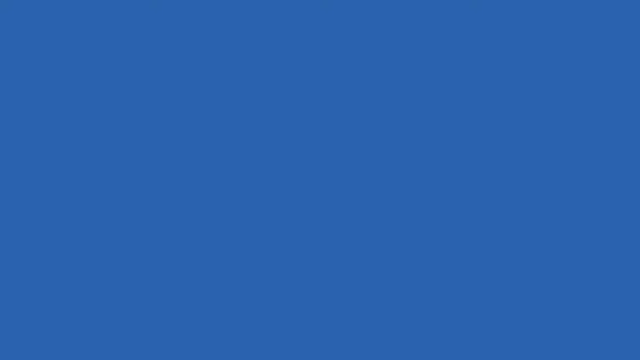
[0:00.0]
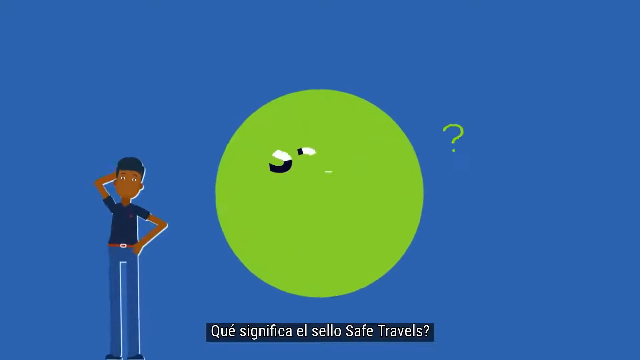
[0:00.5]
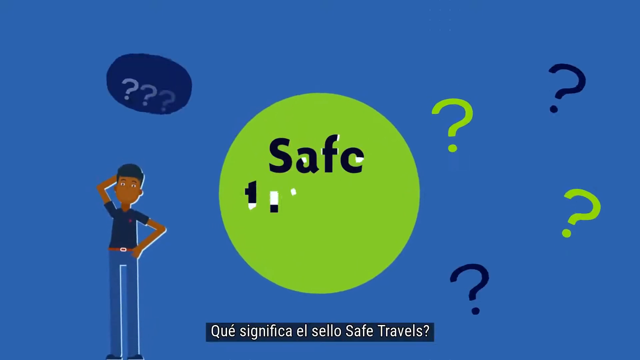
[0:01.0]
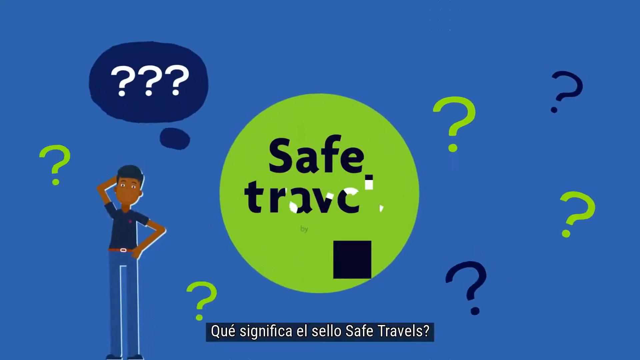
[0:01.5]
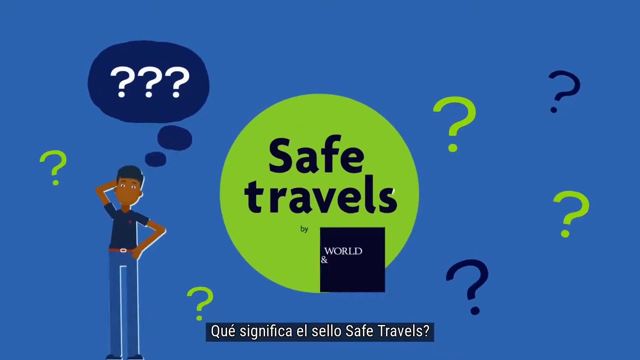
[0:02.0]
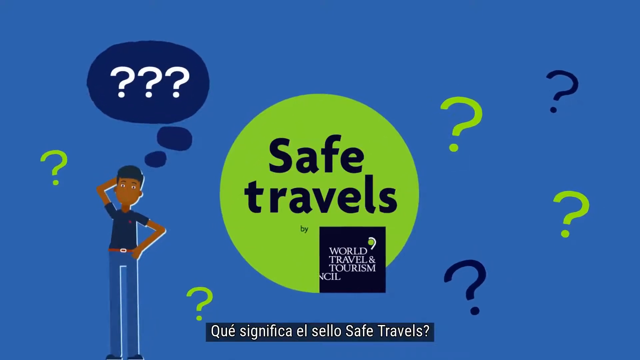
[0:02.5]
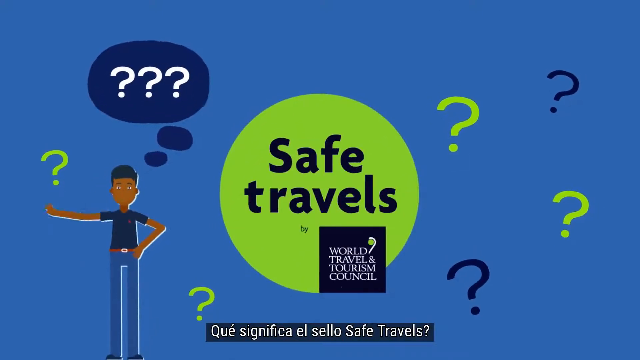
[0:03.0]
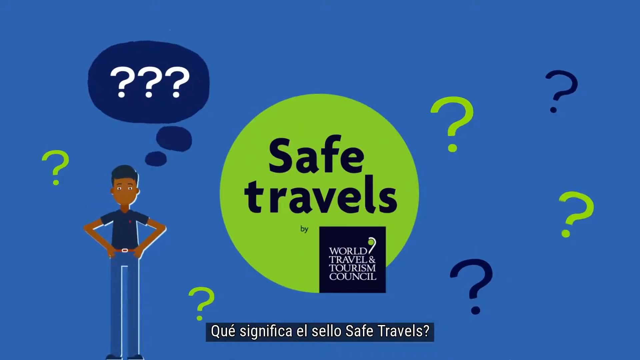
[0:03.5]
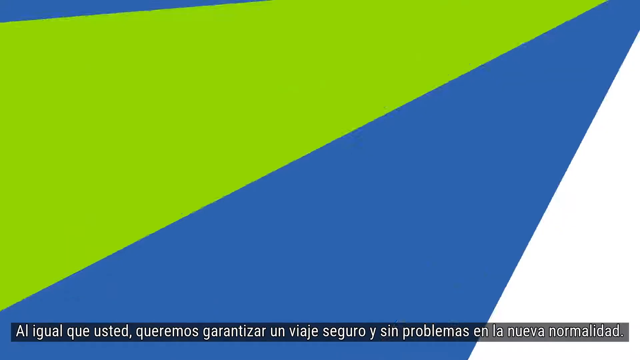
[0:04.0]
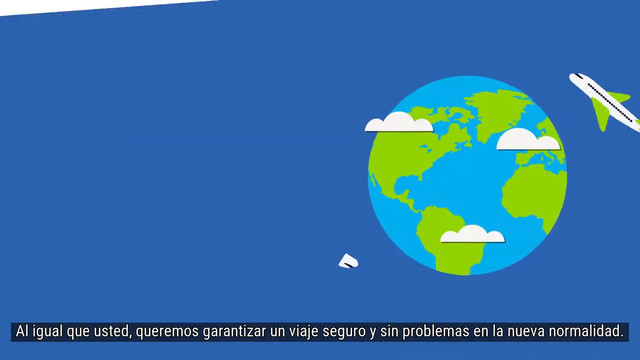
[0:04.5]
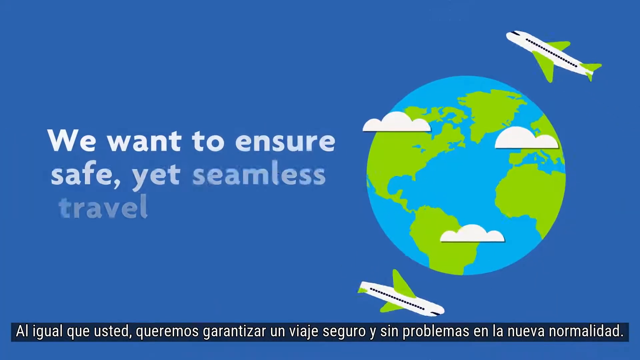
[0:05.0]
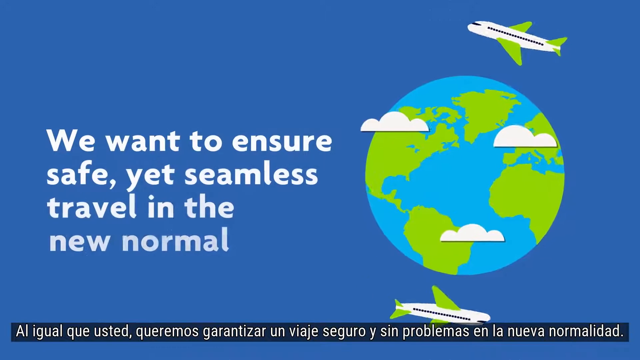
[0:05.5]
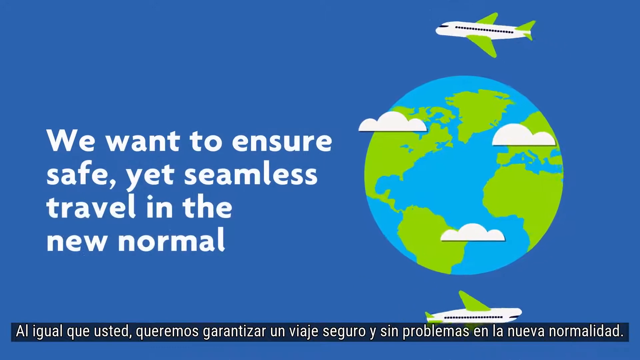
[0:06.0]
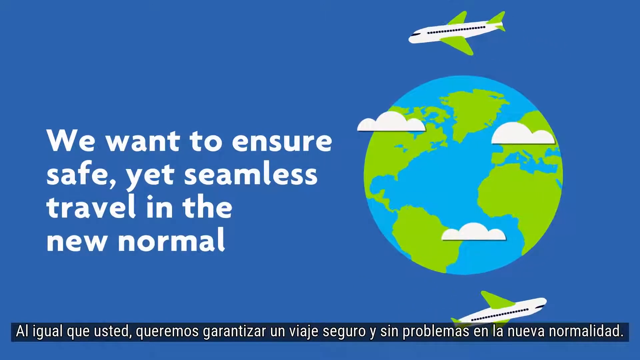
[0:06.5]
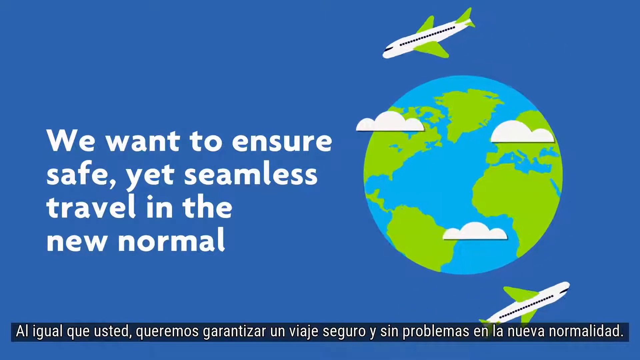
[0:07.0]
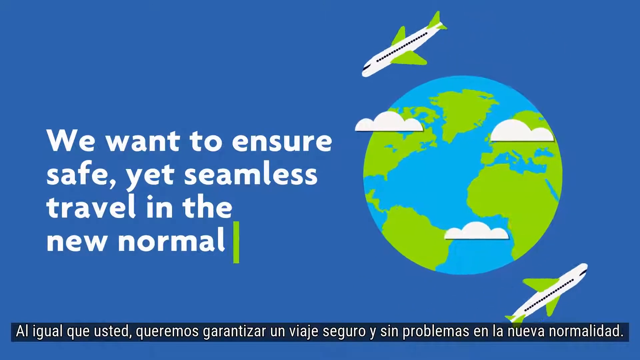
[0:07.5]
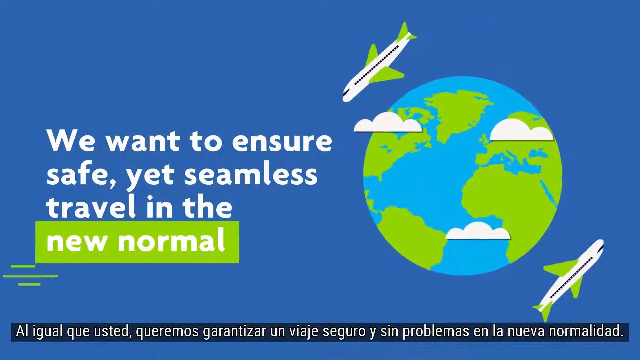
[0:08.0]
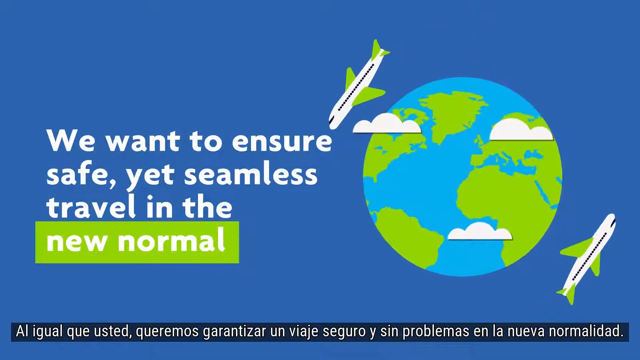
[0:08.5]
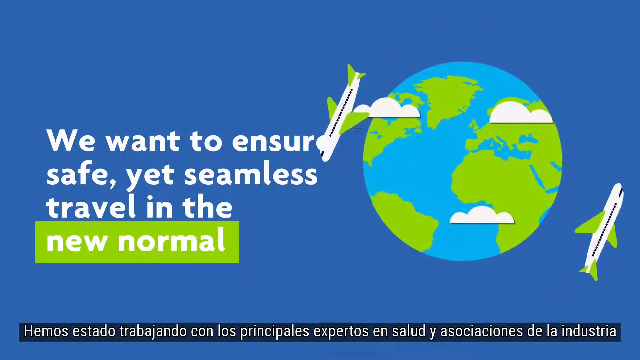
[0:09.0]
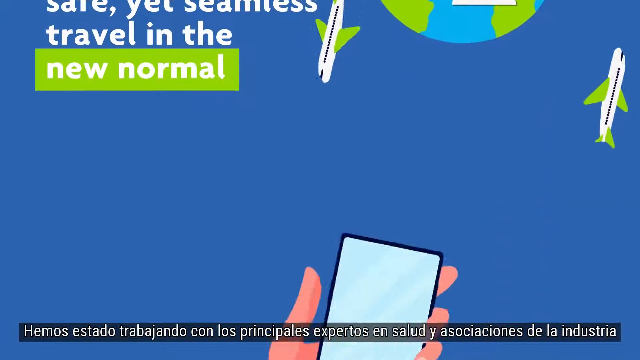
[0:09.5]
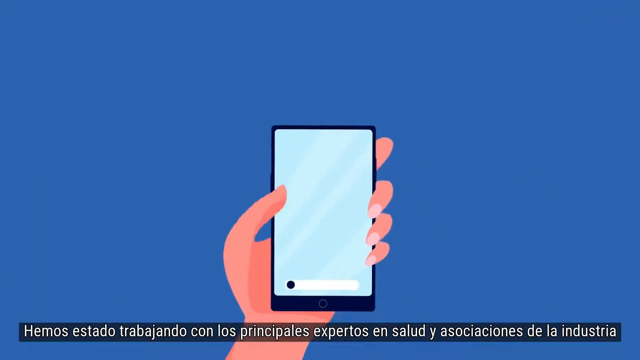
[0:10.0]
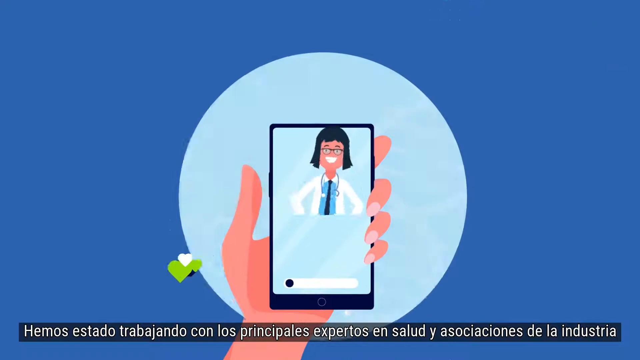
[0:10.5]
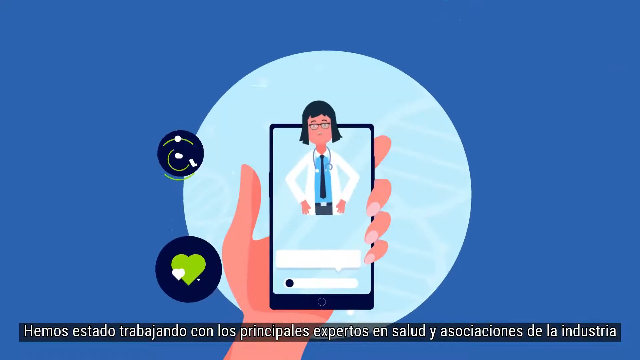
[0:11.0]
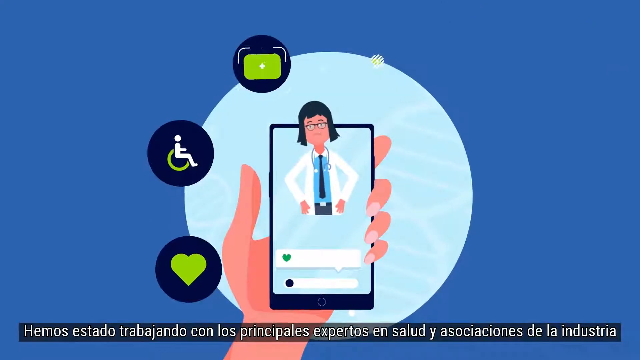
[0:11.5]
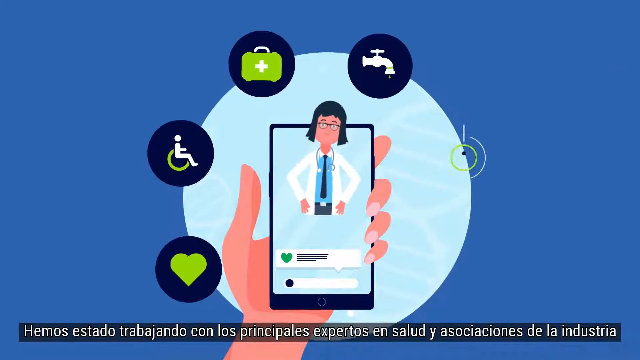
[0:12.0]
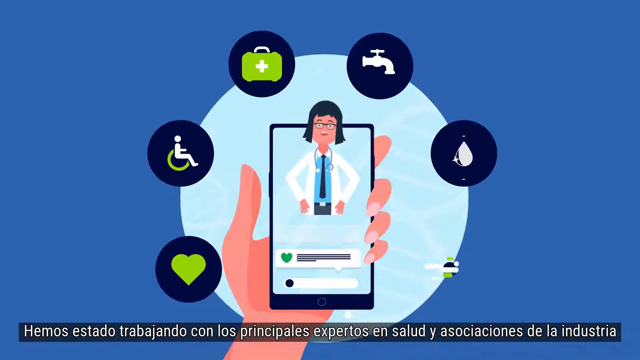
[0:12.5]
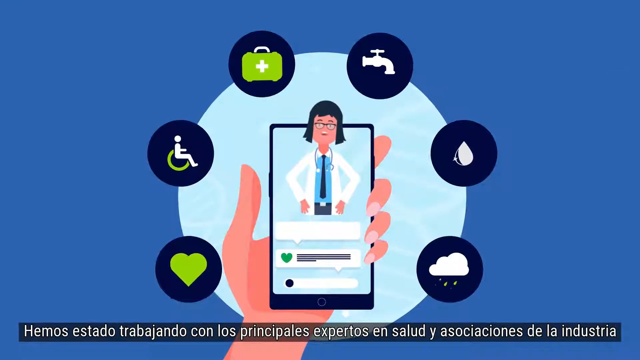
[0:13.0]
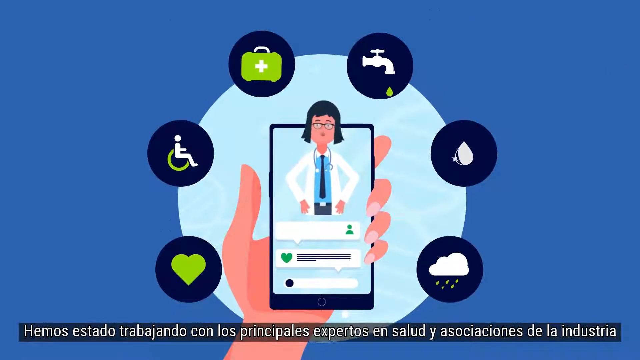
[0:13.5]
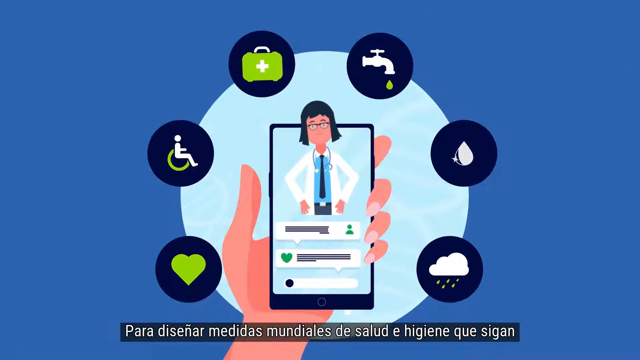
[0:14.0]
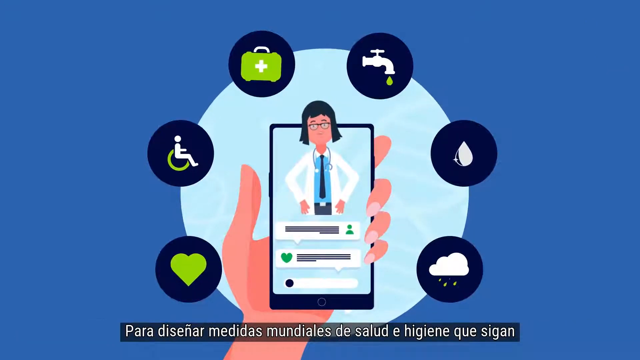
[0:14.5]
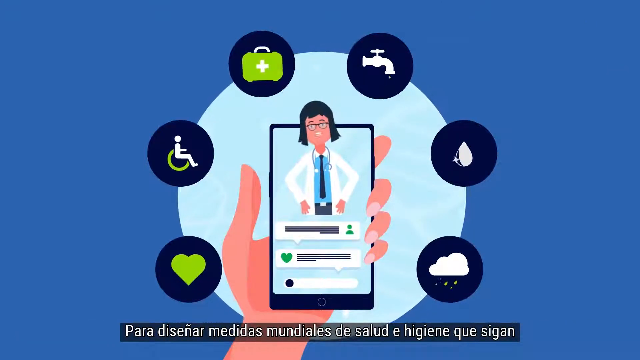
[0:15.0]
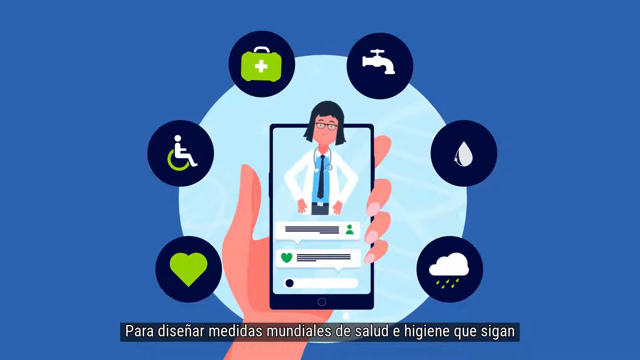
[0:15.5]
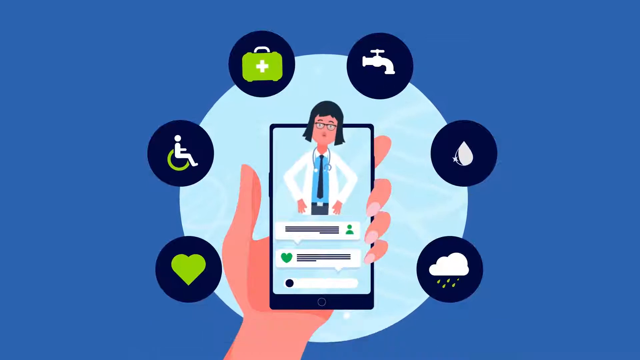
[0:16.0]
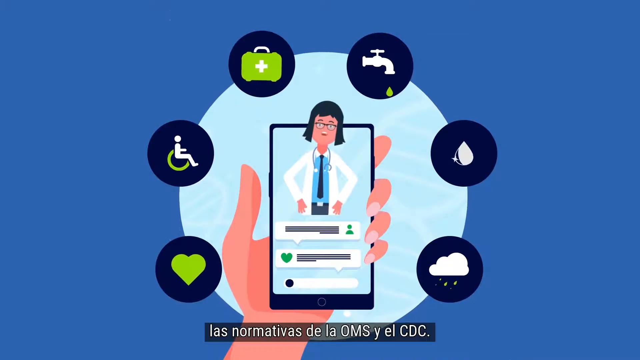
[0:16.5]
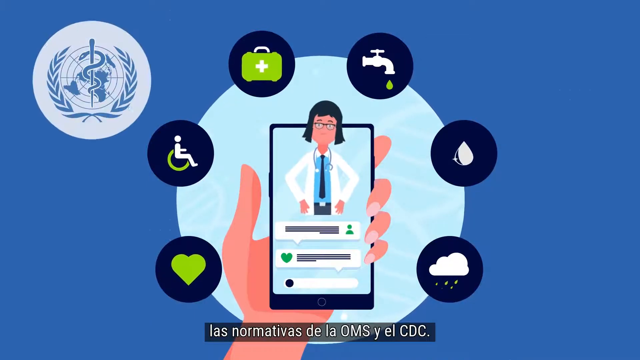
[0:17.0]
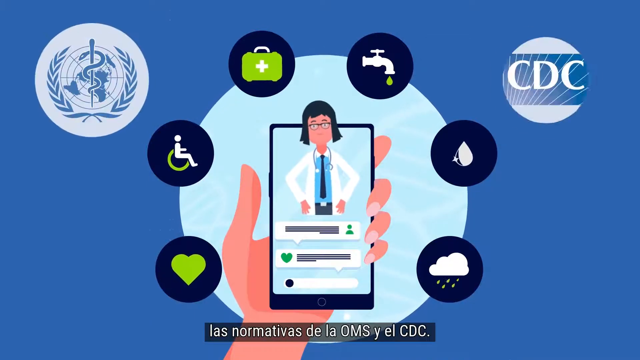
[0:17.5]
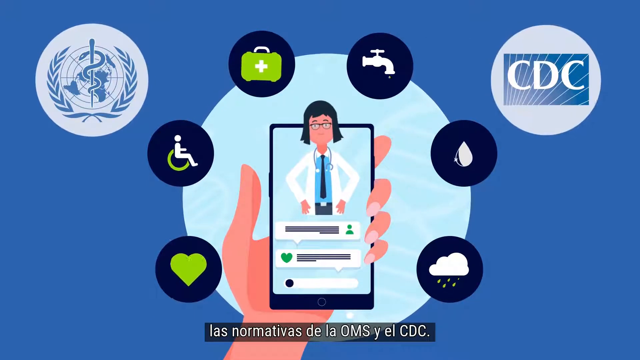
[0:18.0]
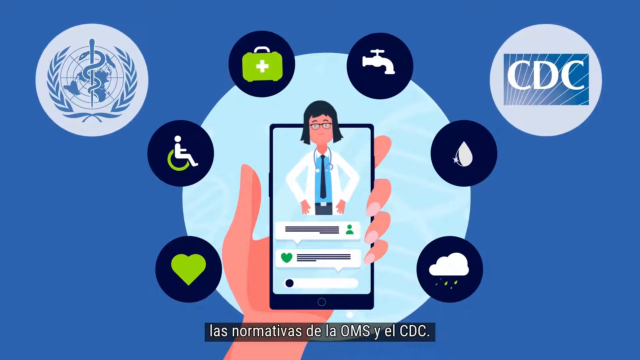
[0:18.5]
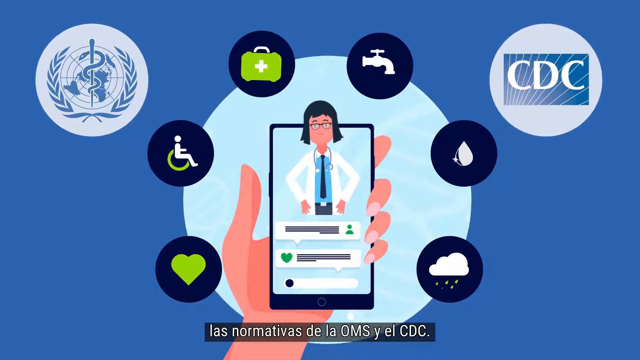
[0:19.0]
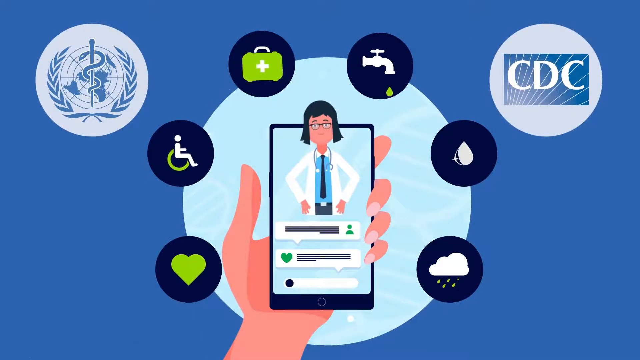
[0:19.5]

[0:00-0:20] The video is about Safe Travels by the World Travel and Tourism Council. An animation shows men against a blue background. Text then reads "we want to ensure safe yet seamless travel in new normal," with a world, clouds and two airplanes. Next, a mobile phone shows a doctor with six icons: a heart, a cloud, water, a tap, a first aid kit and a wheelchair. The doctor is talking. Icons of the CDC and a second organization appear. Finally, a world is shown. The video is fast and animated.